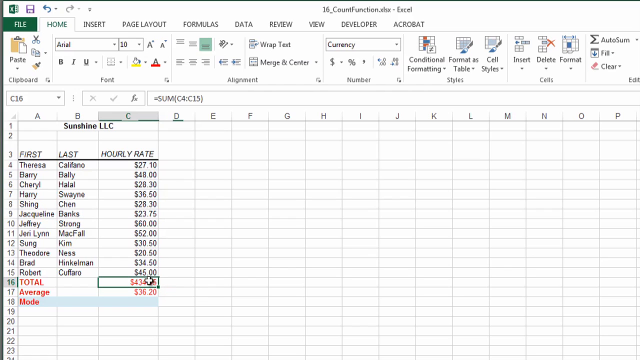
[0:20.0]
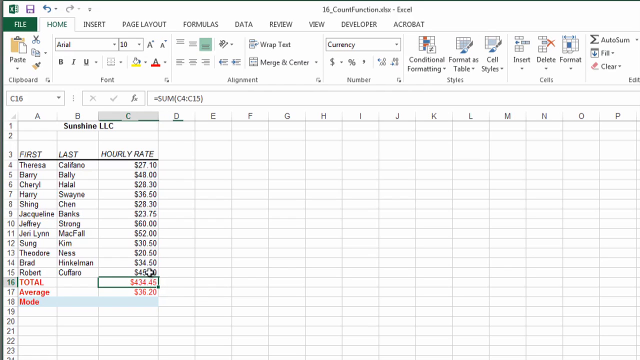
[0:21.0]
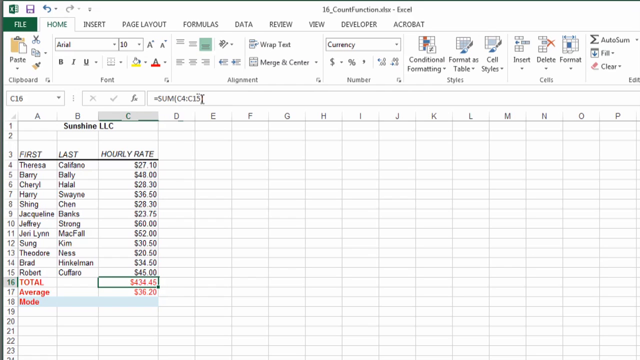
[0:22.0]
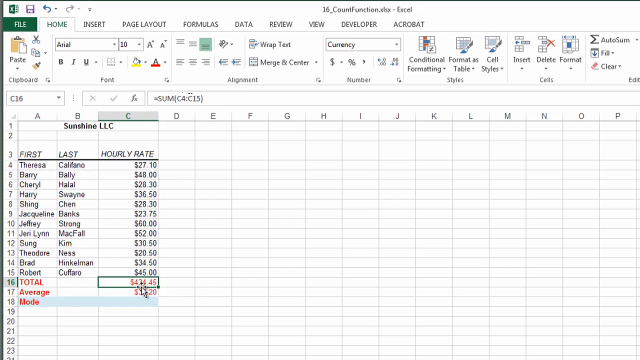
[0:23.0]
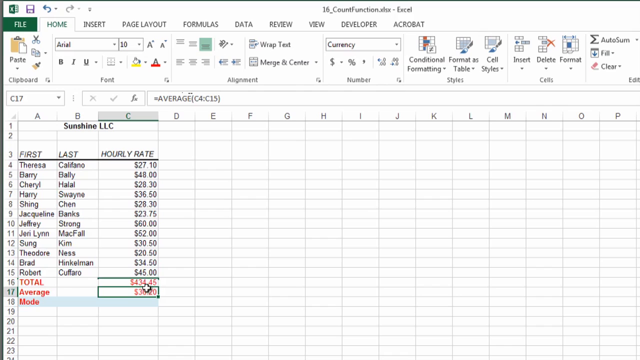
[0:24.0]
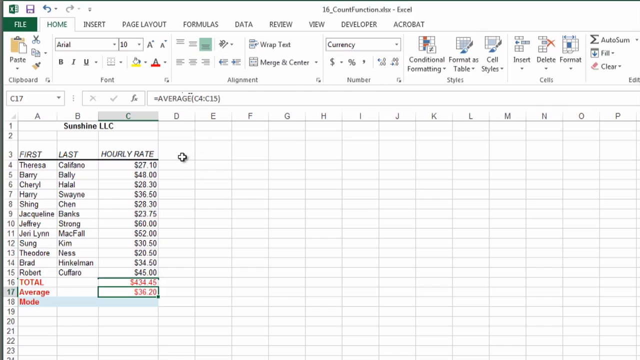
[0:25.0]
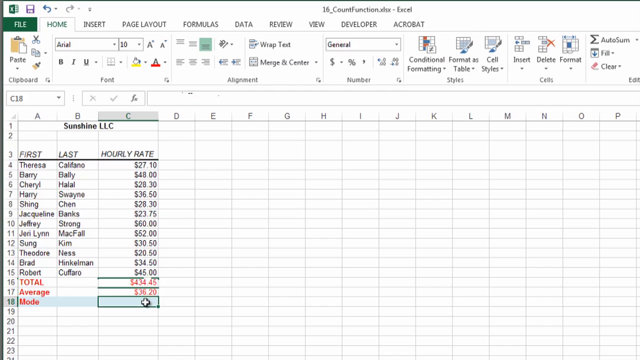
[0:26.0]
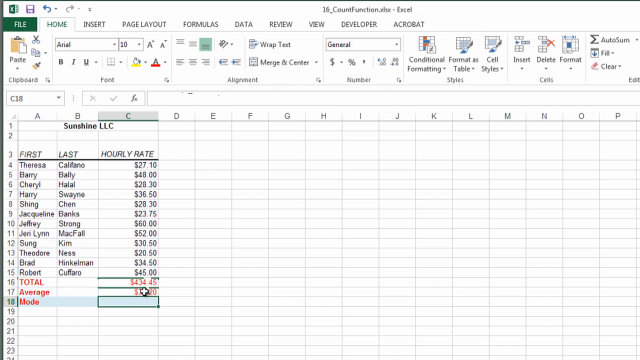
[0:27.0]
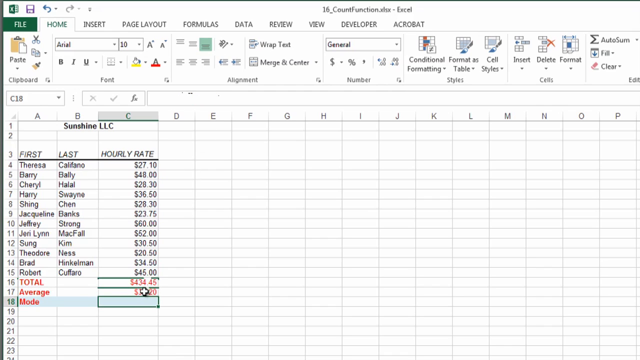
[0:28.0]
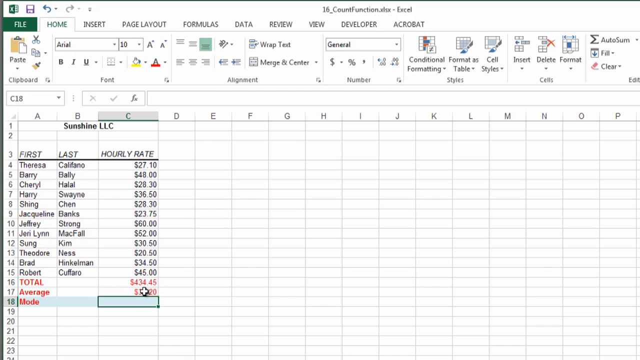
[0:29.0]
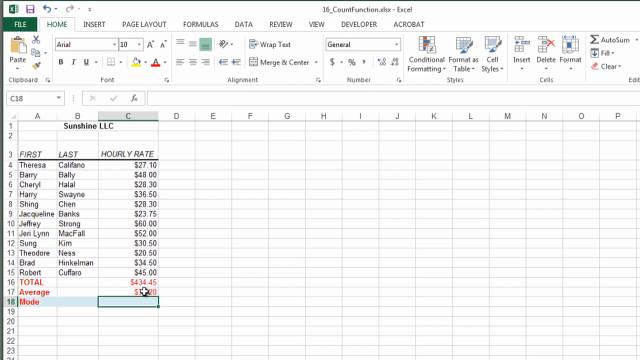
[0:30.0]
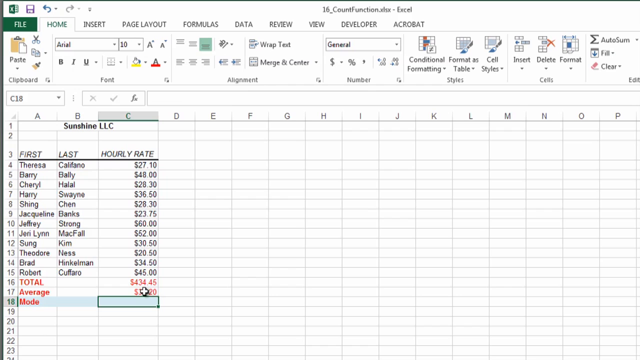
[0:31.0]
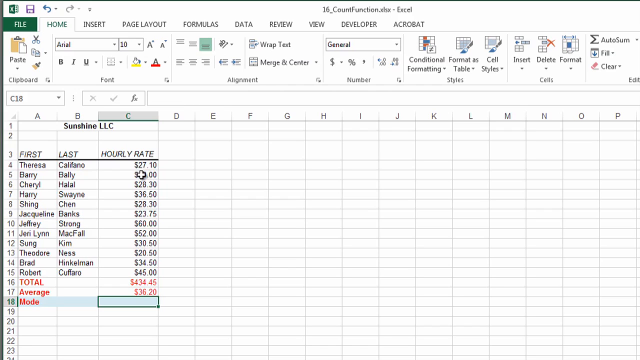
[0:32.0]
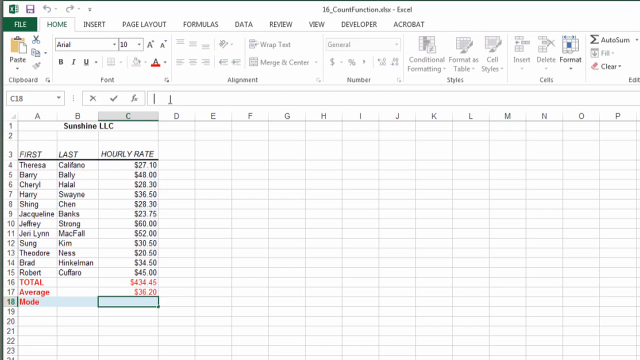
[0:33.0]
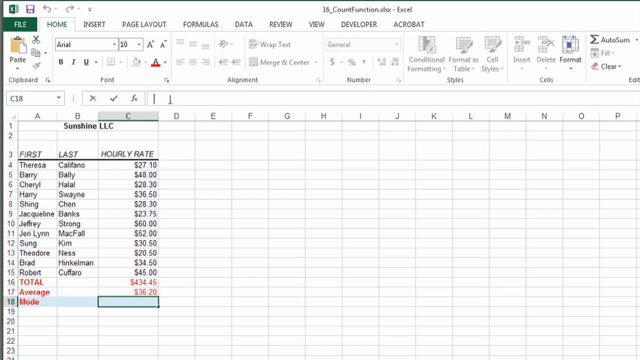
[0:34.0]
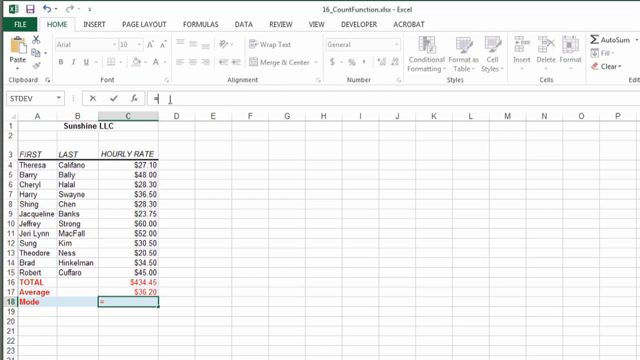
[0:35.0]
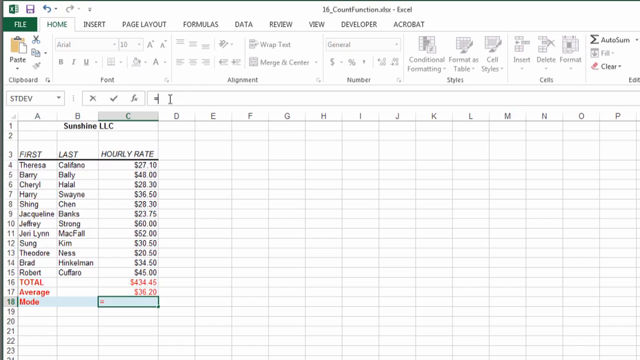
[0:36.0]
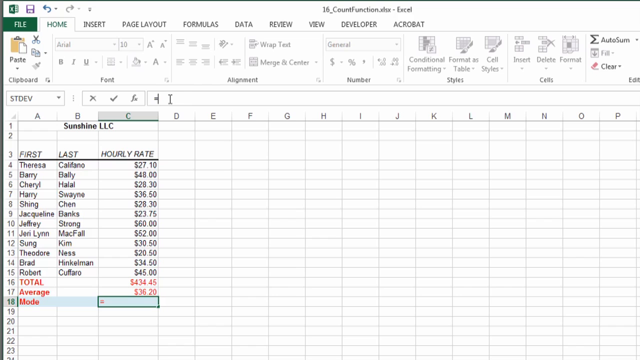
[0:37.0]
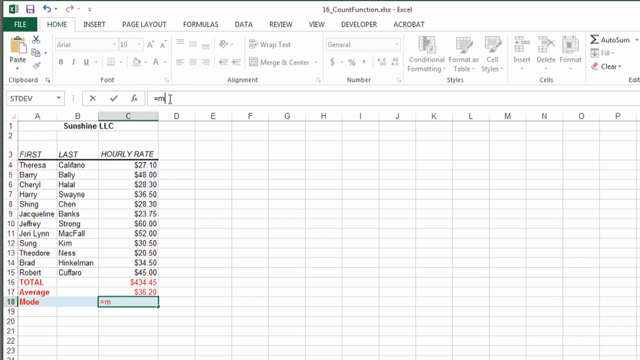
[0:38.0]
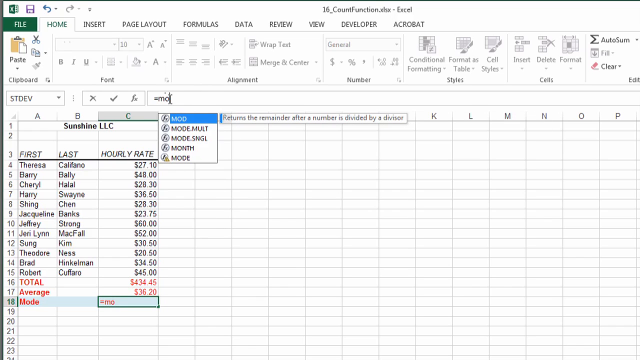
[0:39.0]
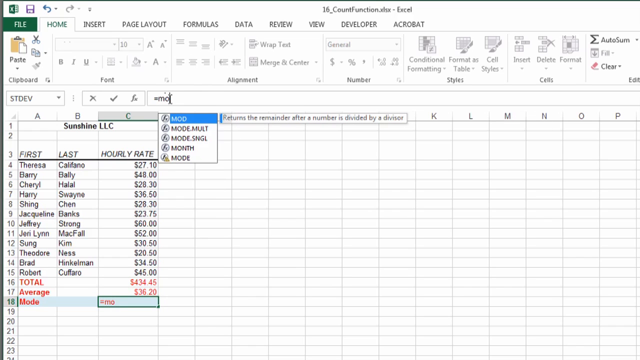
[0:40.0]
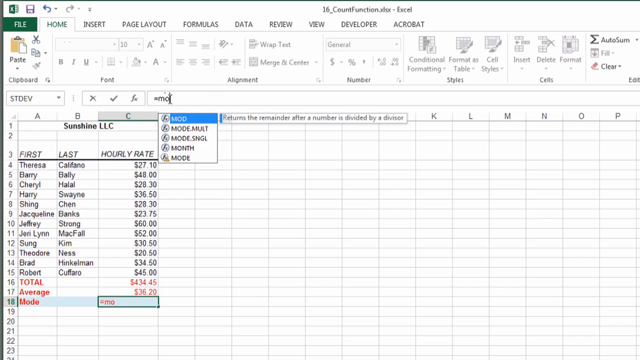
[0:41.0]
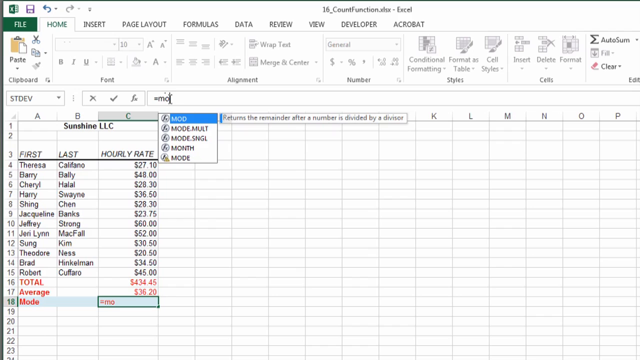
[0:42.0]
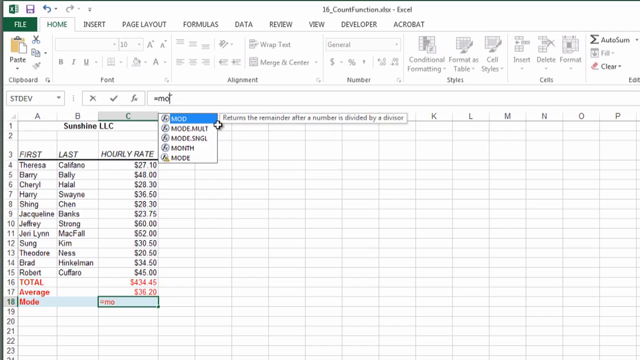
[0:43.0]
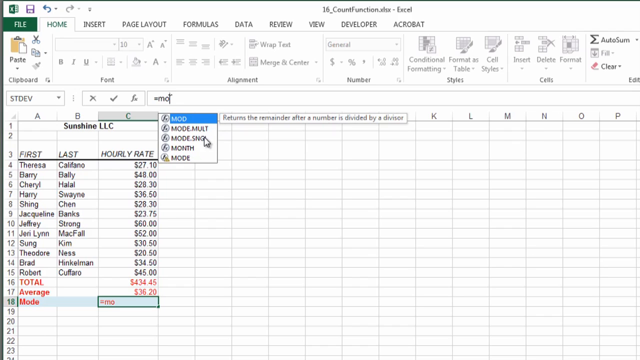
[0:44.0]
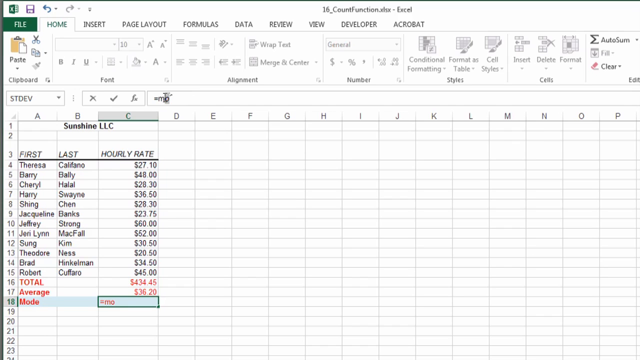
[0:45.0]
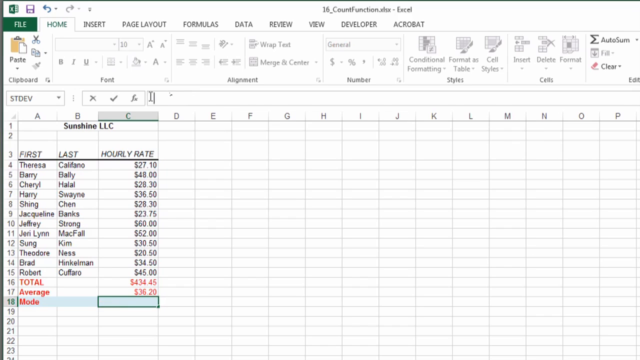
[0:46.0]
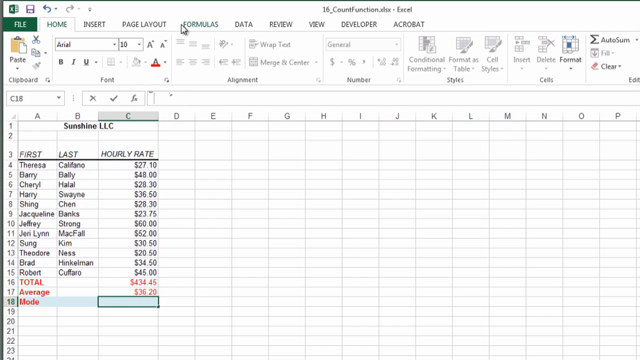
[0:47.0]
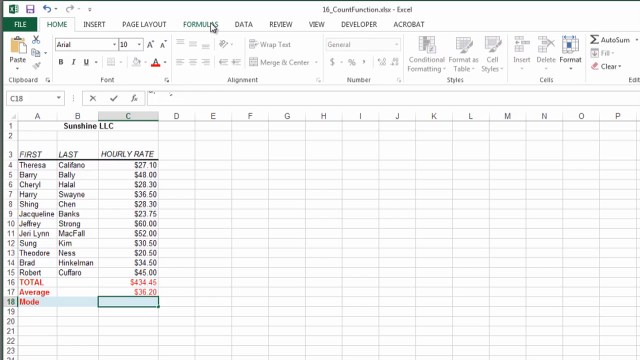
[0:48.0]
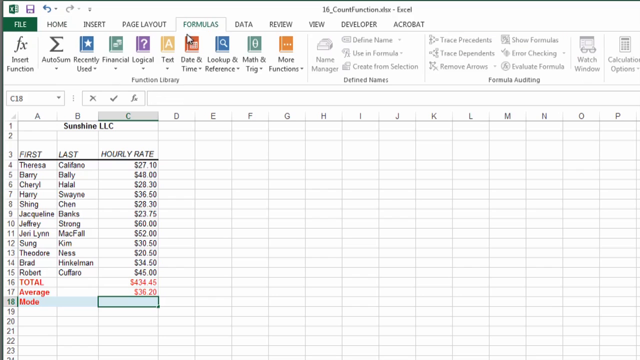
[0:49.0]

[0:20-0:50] A Microsoft Excel window with various tools is shown. At the top of the window is the document title, "16_count function.xhx". There are ten tabs: "File", "Home", "Insert", "Page Layout", "Formulas", "Data", "Review", "View", "Developer" and "Acrobat". The spreadsheet holds data for a company called Sunshine LLC, including the first and last names of employees and an hourly rate. The cursor clicks on different hourly rates, demonstrating how they are calculated, and the function of each box is displayed in the function box.